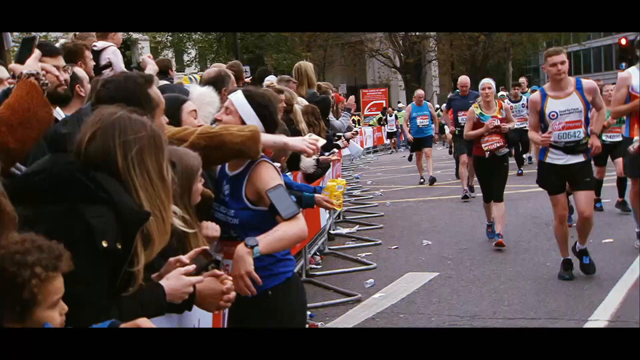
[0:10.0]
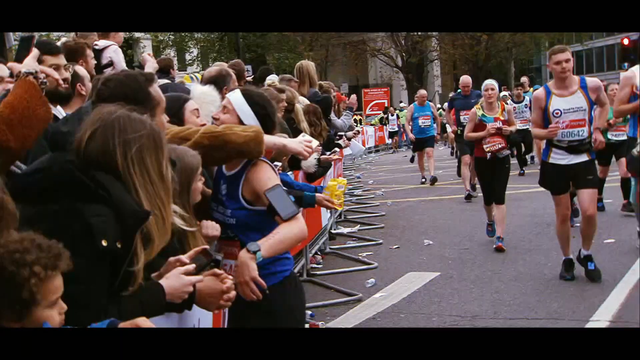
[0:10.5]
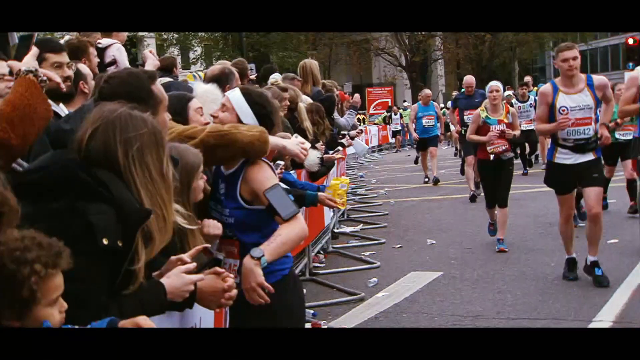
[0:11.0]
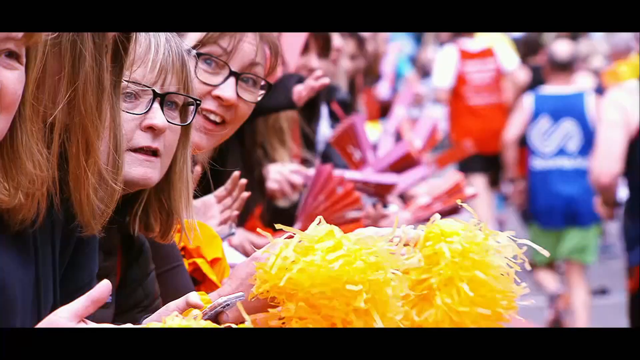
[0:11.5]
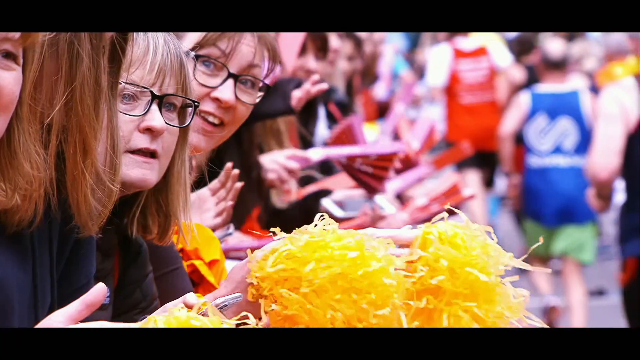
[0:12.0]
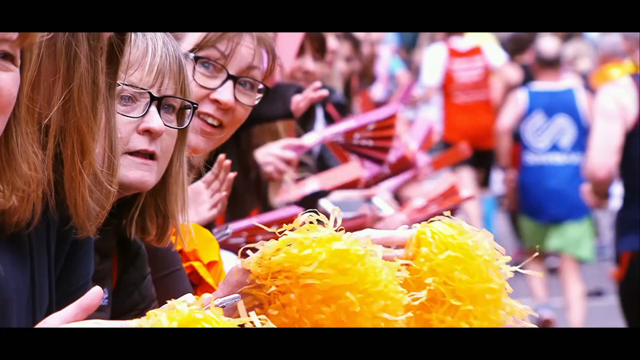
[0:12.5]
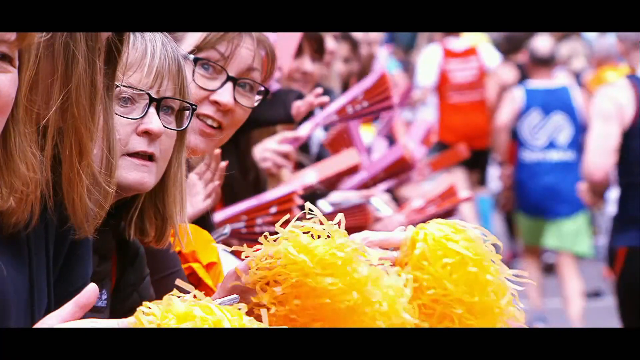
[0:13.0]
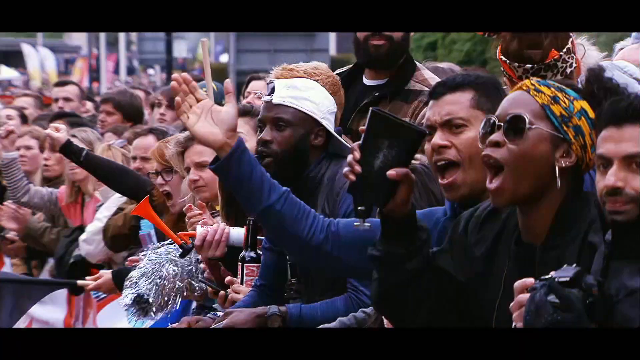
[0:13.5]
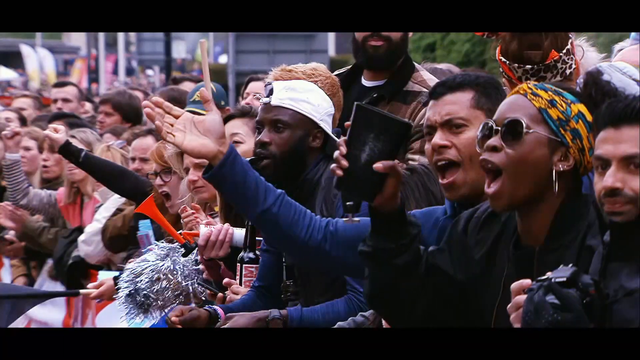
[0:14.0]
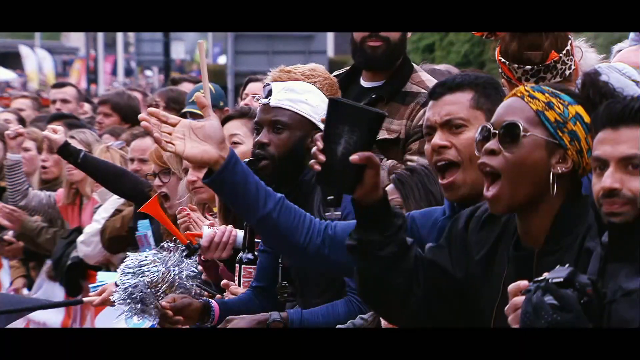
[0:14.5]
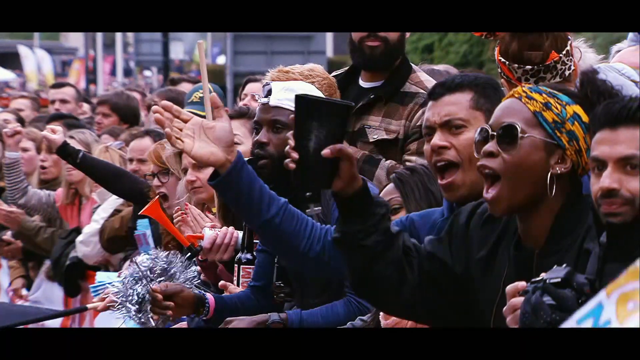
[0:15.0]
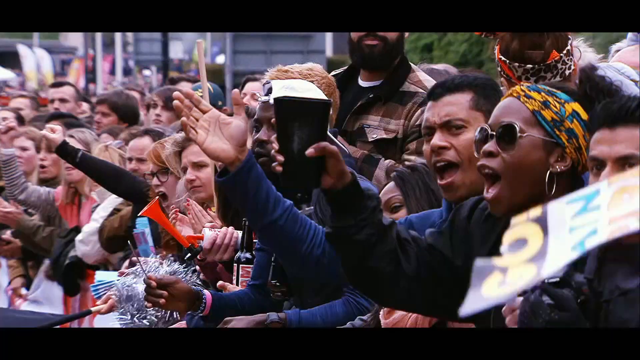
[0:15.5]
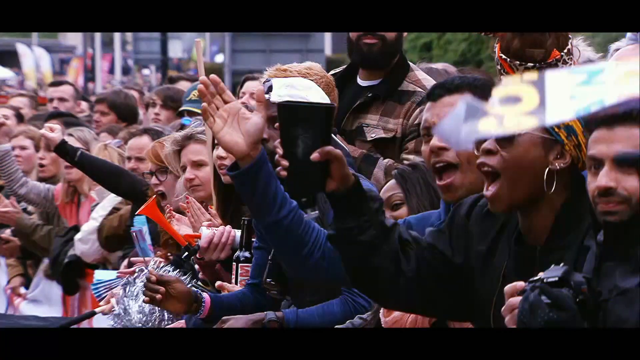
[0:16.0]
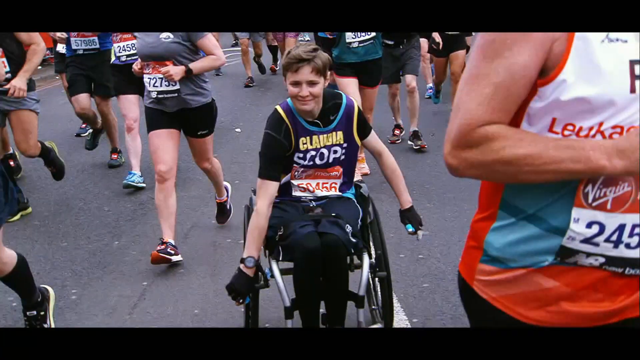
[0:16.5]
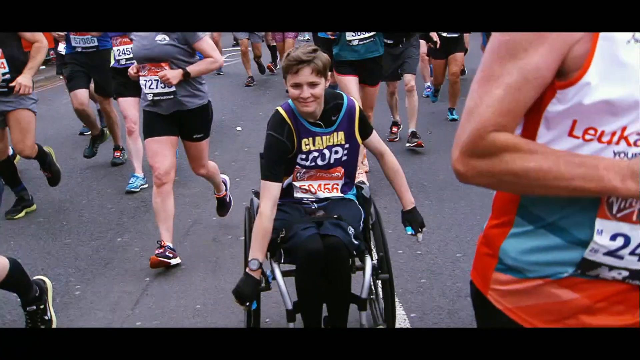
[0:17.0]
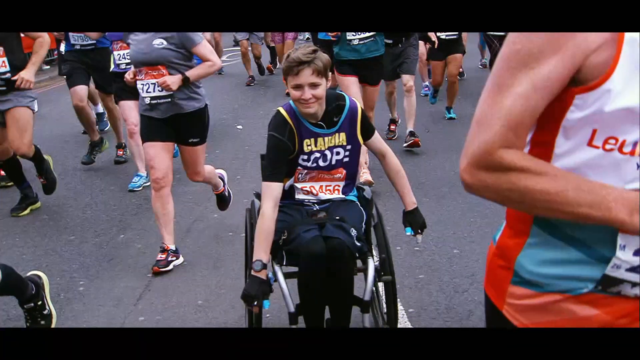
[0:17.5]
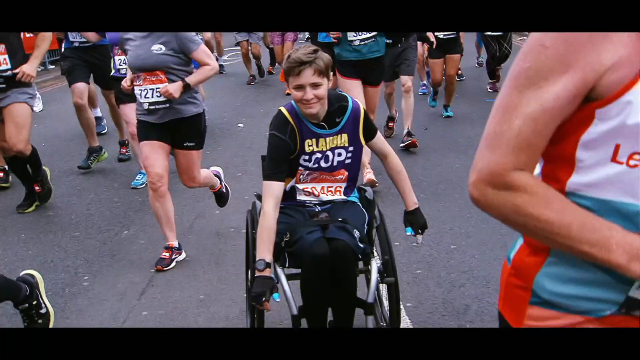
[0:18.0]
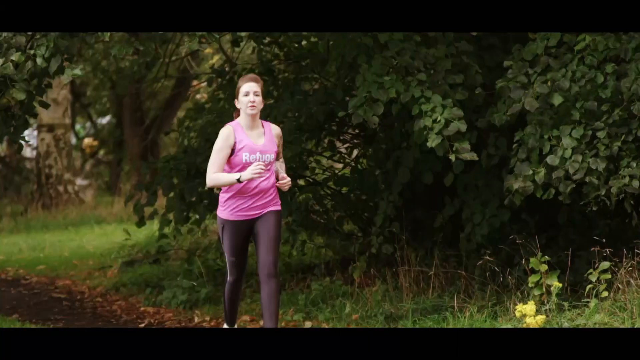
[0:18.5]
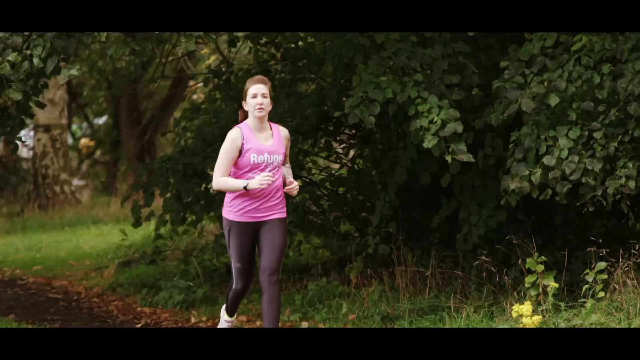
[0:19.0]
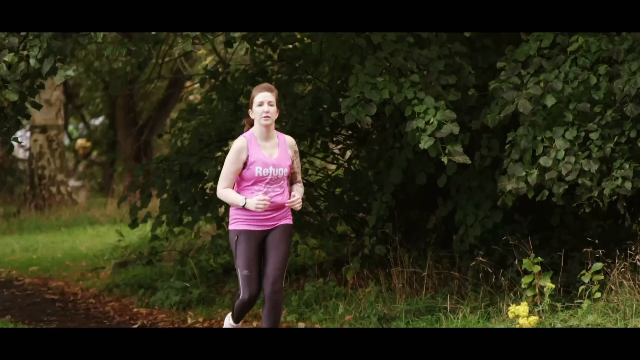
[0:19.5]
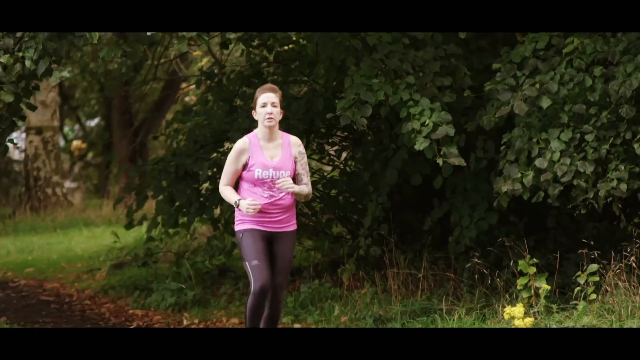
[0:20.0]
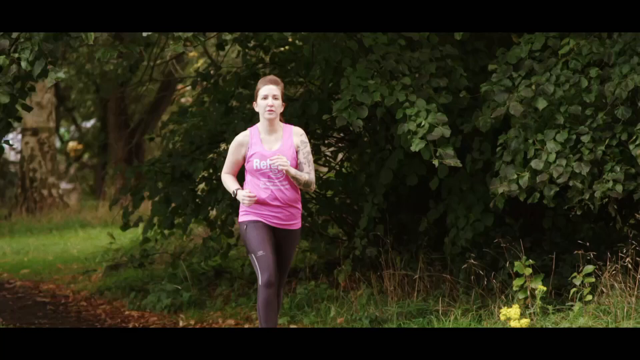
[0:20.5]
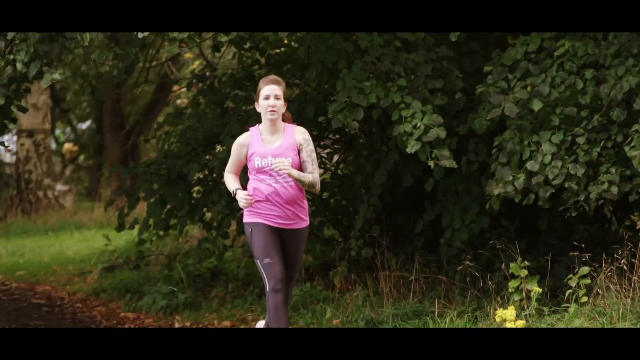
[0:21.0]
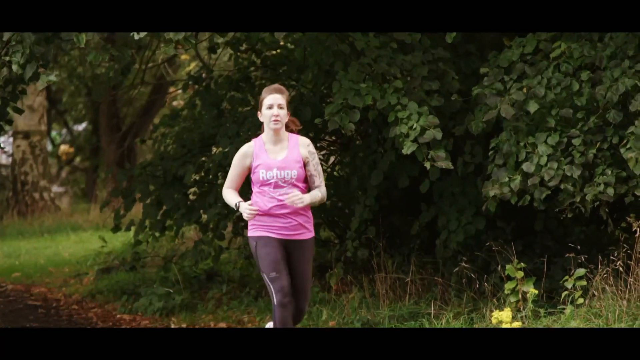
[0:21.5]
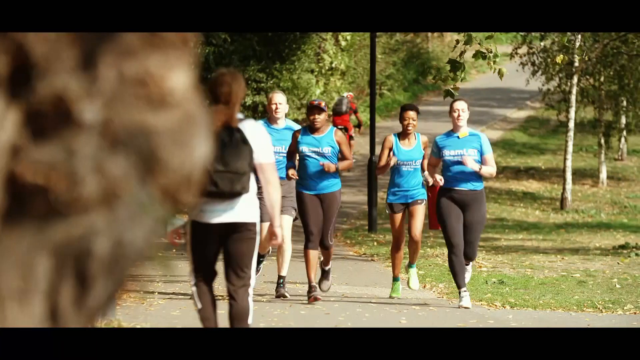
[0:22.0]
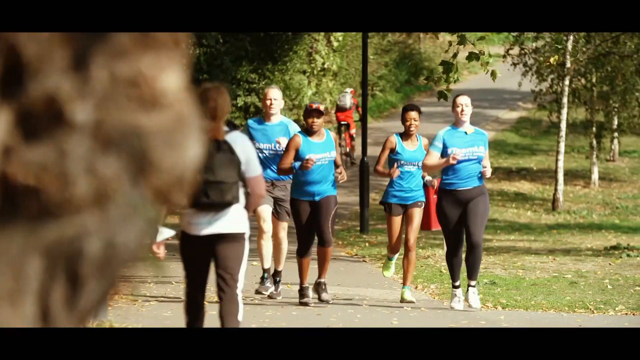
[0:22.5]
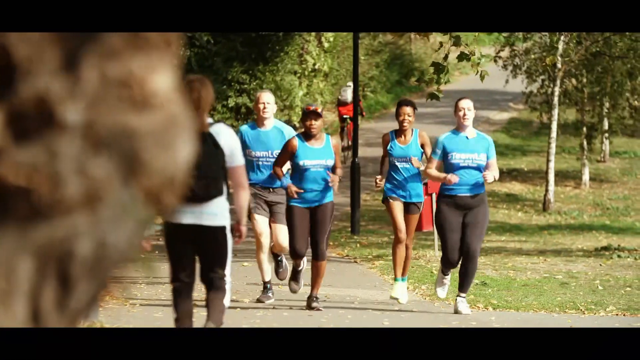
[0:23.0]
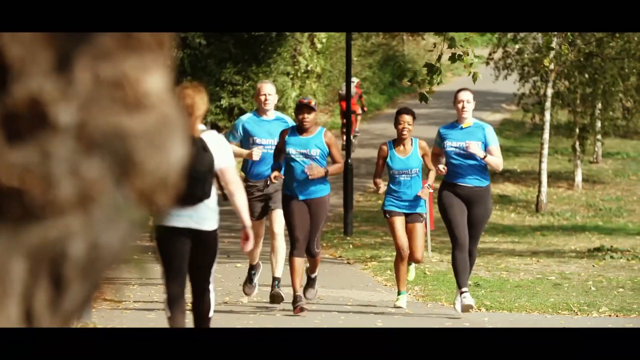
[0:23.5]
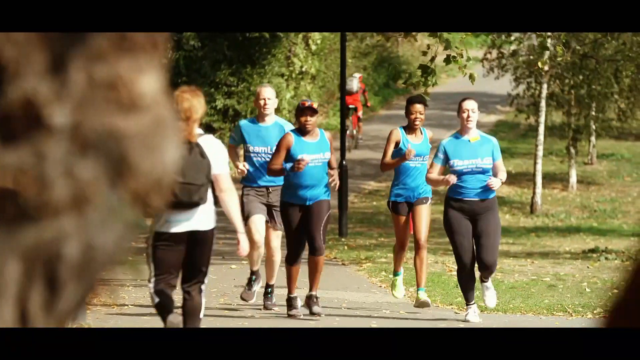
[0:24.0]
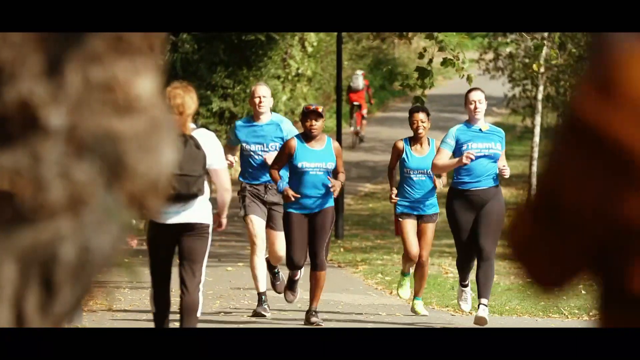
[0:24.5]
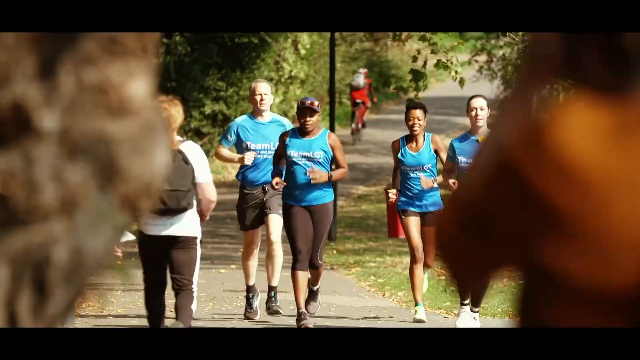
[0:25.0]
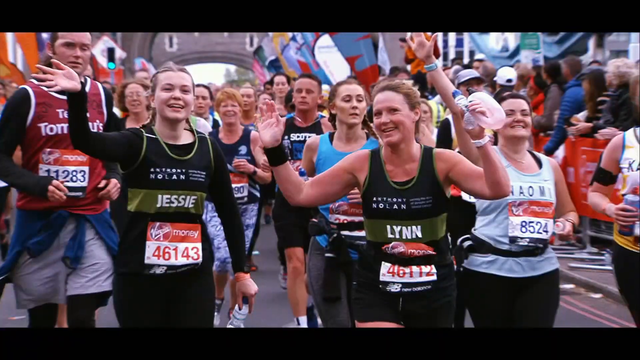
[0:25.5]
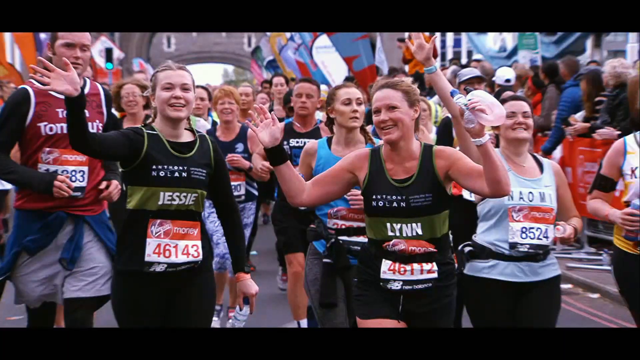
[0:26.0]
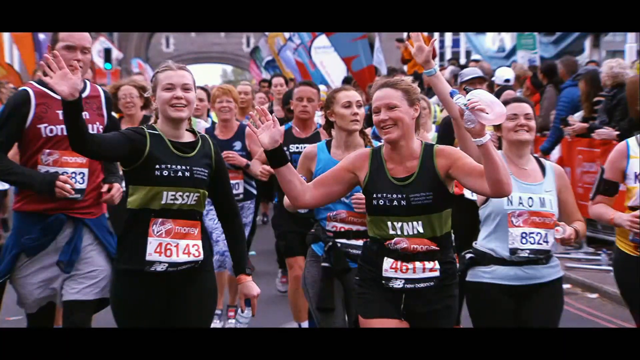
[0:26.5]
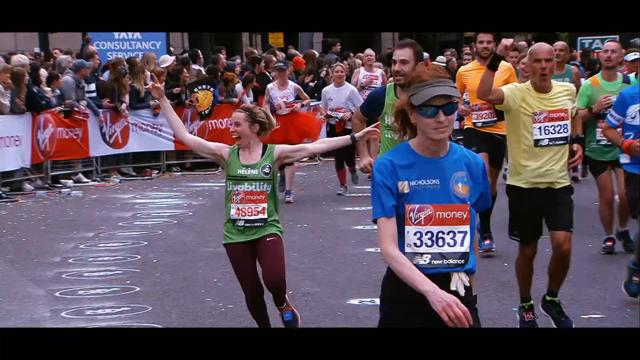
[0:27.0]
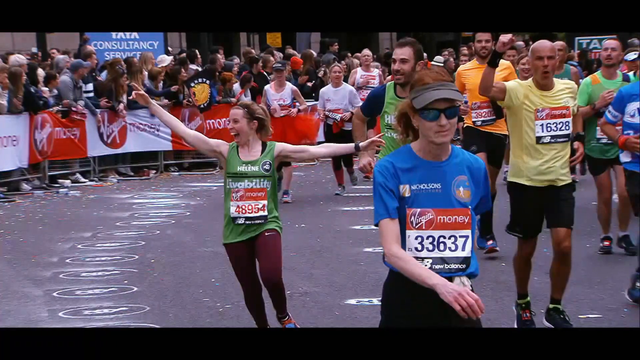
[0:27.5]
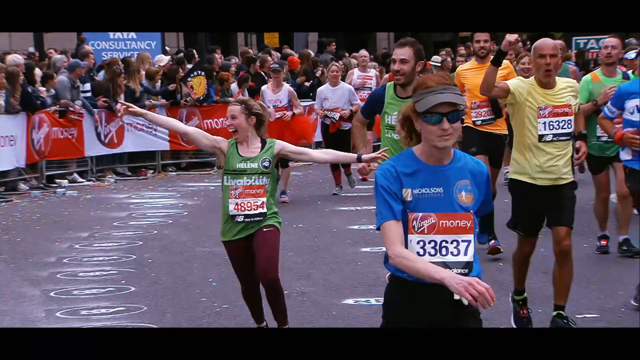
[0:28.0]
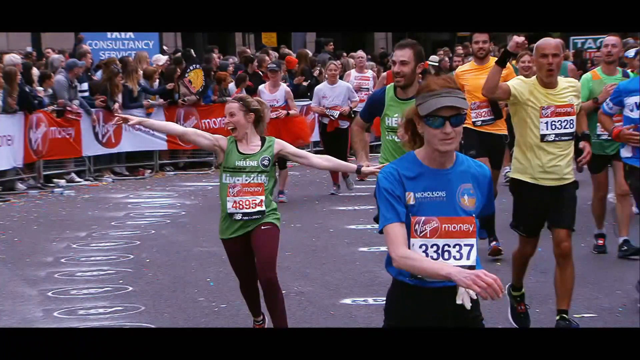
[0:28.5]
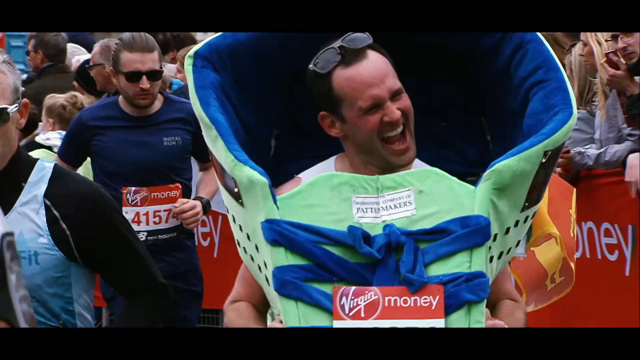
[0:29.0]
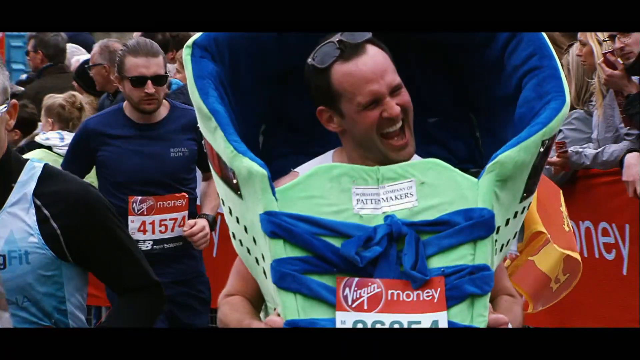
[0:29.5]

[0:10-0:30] The runner leans toward the person embracing them, who is also embracing them, possibly for a kiss. The video transitions to people cheering for the runners. Two of them are white women with long hair and glasses shaking pom-poms, and some other people are holding fans. Another shot shows more fans, the majority people of color, also holding pom-poms, air horns and possibly a bell. One woman with a dark complexion and sunglasses wears a yellow and teal head wrap, her mouth open as she screams for the runners. Next, one of the runners is in a wheelchair: a white woman with short cropped hair wearing a purple jersey. The scene changes to a white woman with brown hair in black leggings and a pink tank top jogging in the forest in slow motion. Then a group of four people in blue shirts jogs in slow motion toward the camera while a woman in a white t-shirt with a backpack walks toward them. The video returns to the race in slow motion, showing a group of people; the two closest to the camera are thin white women with light-colored hair wearing black and green shirts. The shirt of the woman on the left says "Jessie" and the shirt of the woman on the right says "Lynn". Another angle of the race shows a white woman with blonde hair tied up, wearing a green jersey and burgundy pants, her hands raised and outstretched from her body. In the middle is a man with long tied-up red hair wearing a visor, sunglasses, a blue jersey and black pants, and beside him is a bald white man in a yellow t-shirt and black shorts. Another angle of the race shows a white man with short hair and sunglasses on his head, his mouth open and eyes squinted, wearing a large green and blue costume, with people on both sides of him.